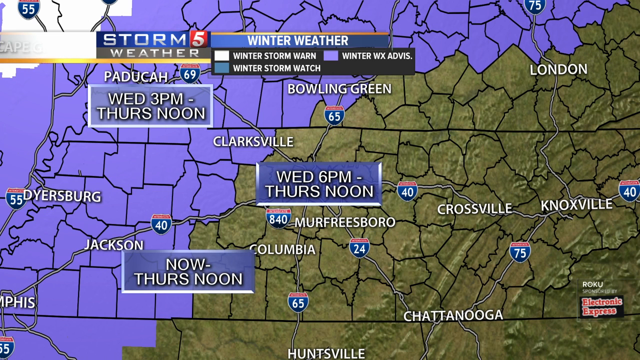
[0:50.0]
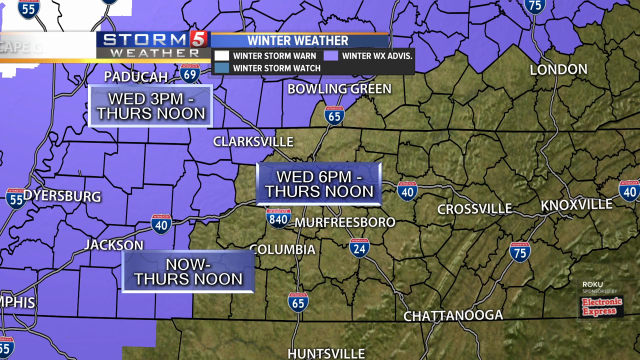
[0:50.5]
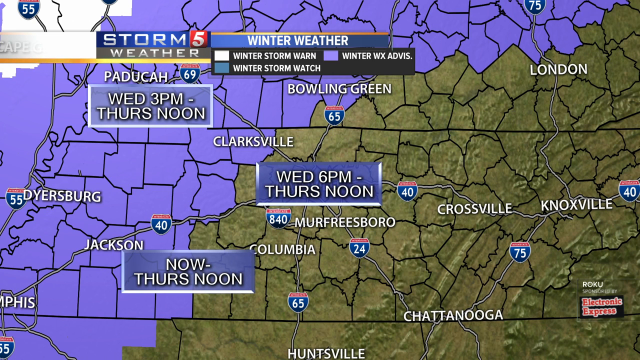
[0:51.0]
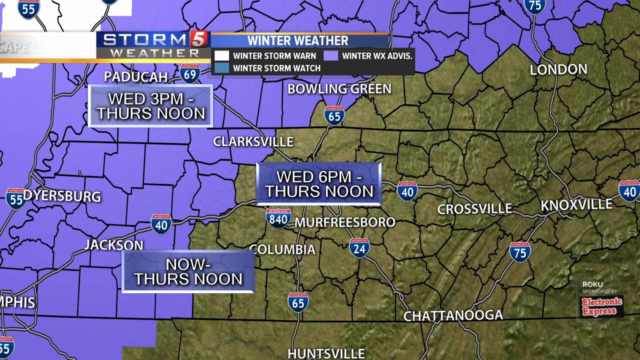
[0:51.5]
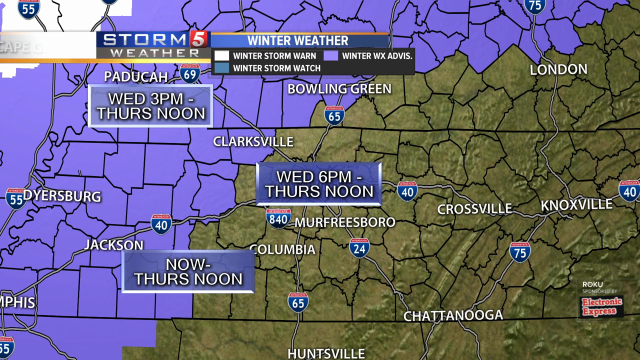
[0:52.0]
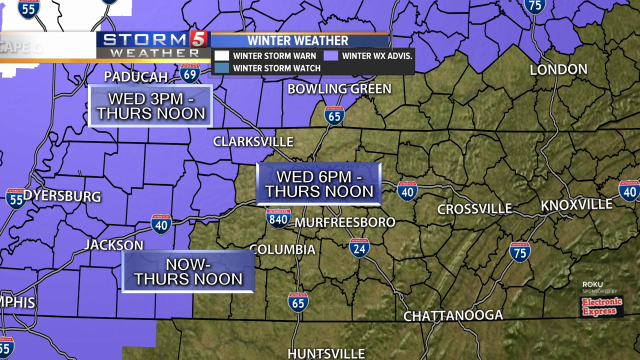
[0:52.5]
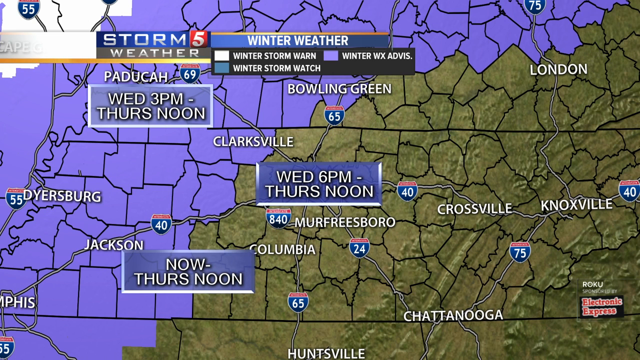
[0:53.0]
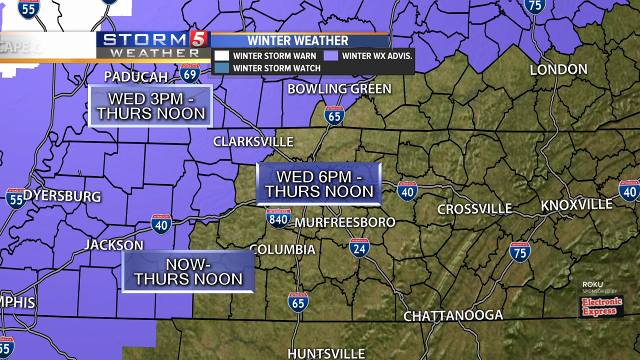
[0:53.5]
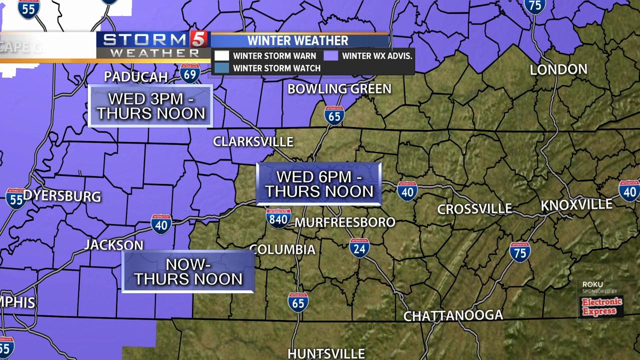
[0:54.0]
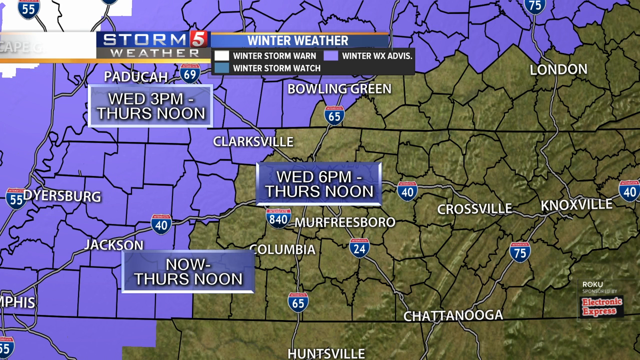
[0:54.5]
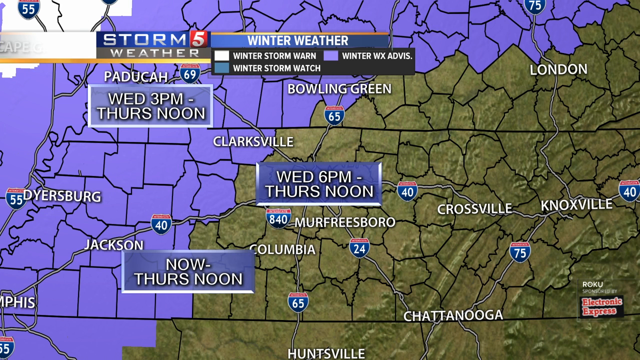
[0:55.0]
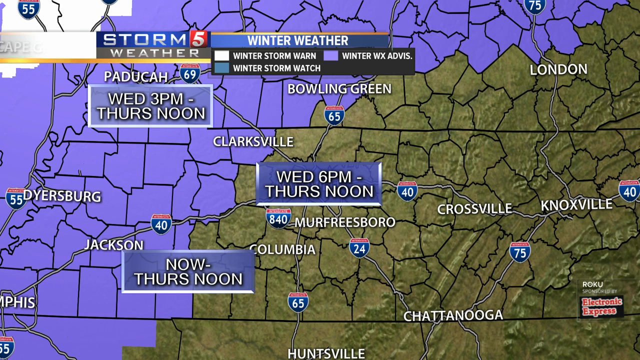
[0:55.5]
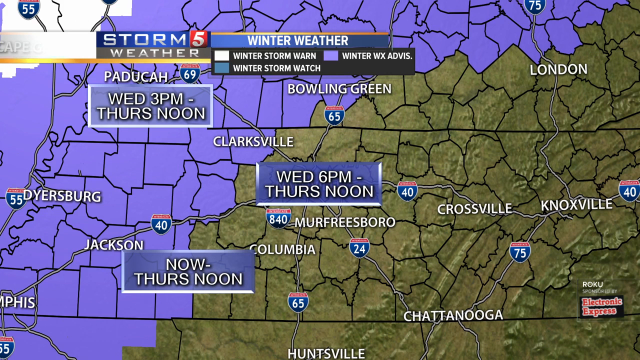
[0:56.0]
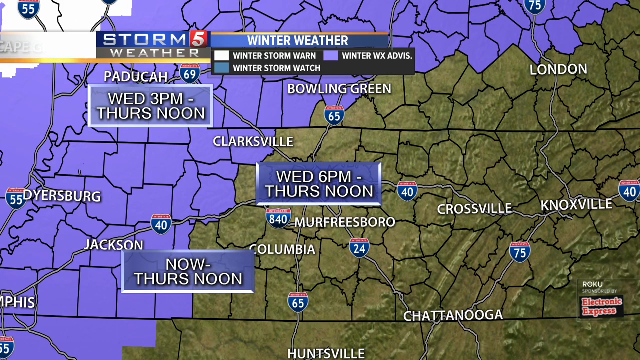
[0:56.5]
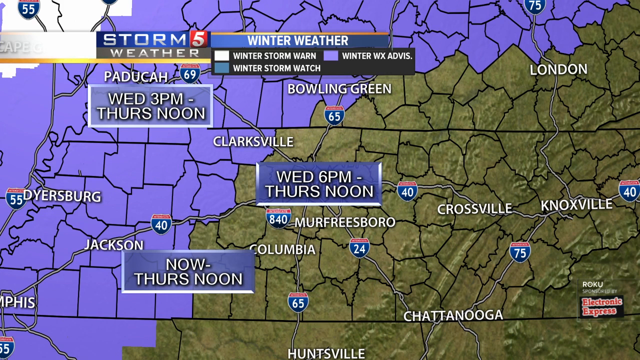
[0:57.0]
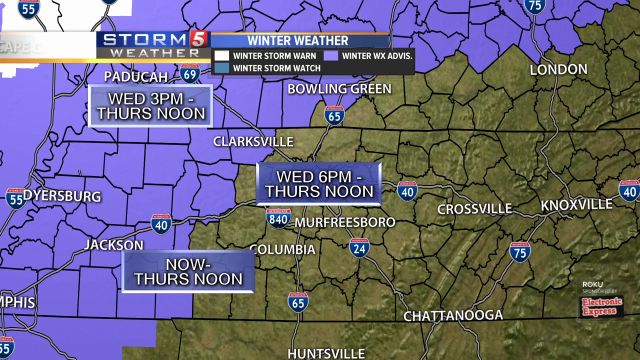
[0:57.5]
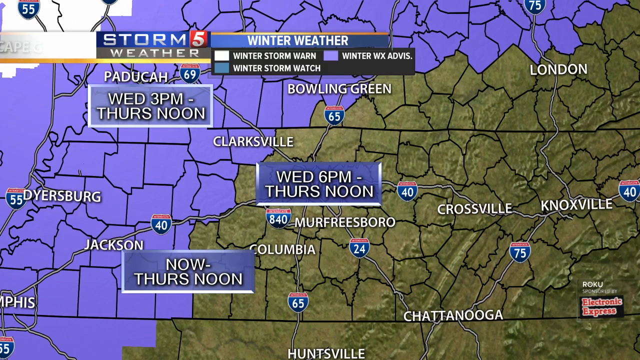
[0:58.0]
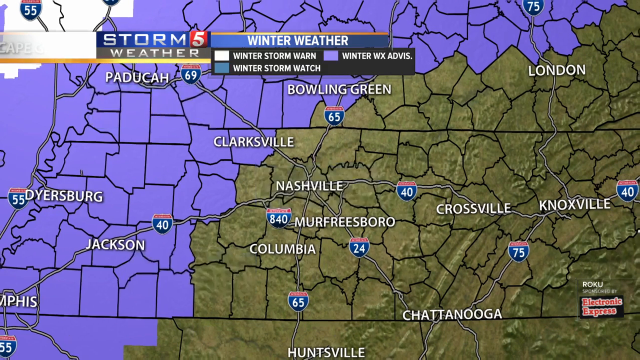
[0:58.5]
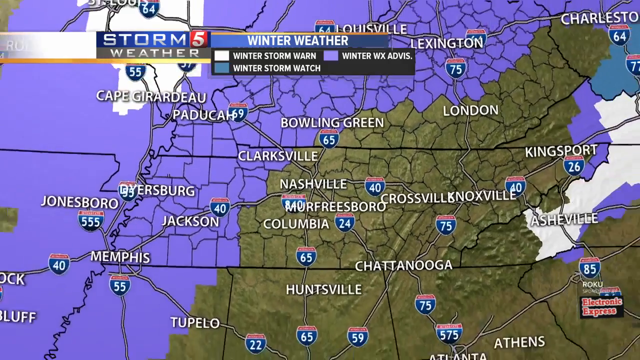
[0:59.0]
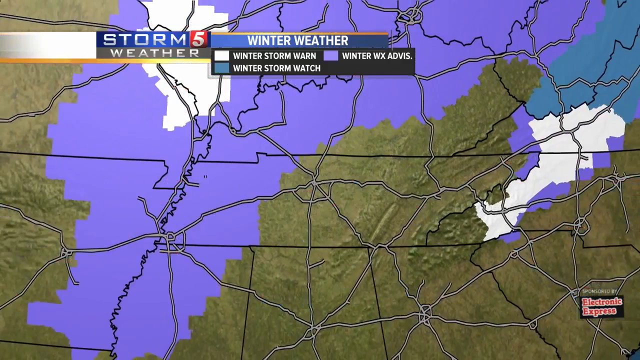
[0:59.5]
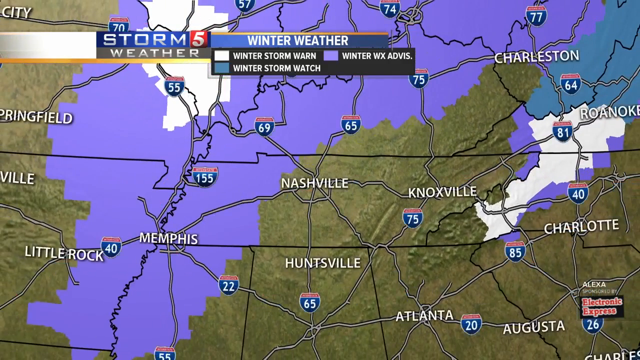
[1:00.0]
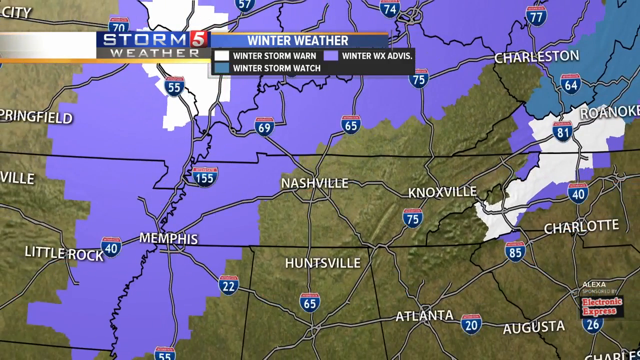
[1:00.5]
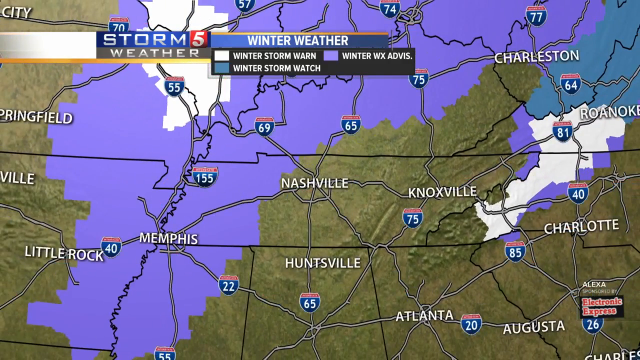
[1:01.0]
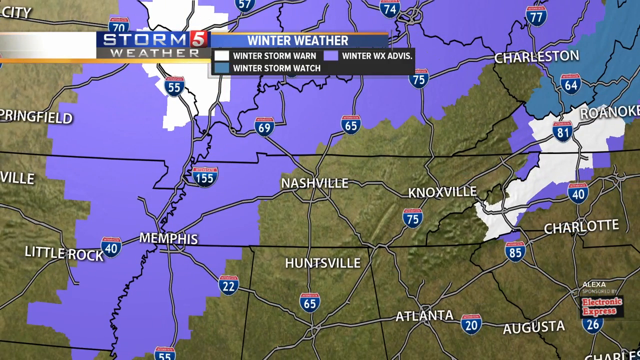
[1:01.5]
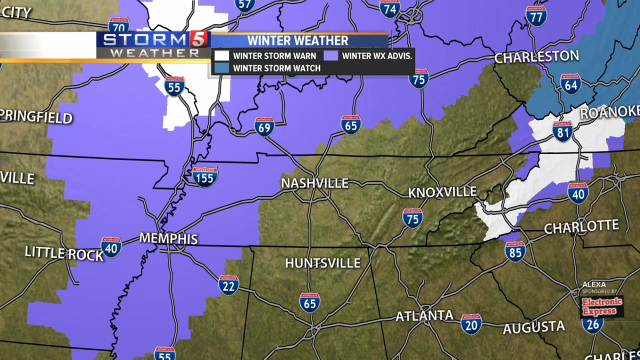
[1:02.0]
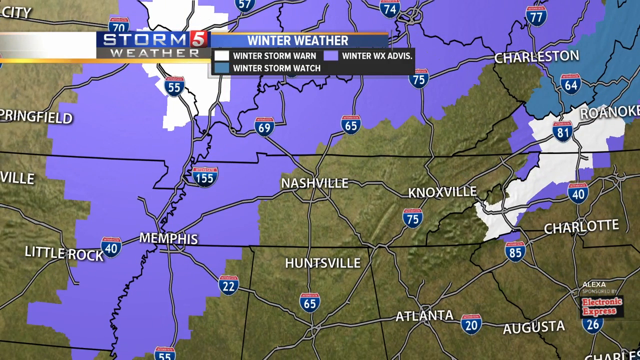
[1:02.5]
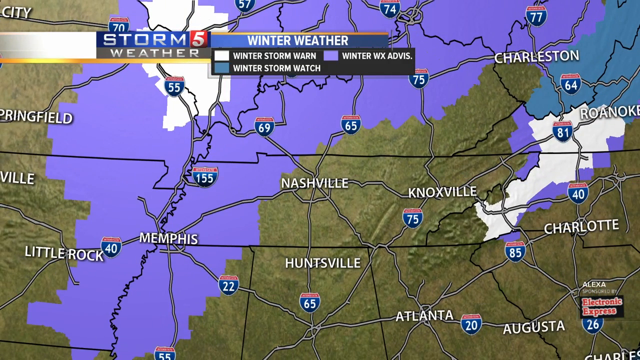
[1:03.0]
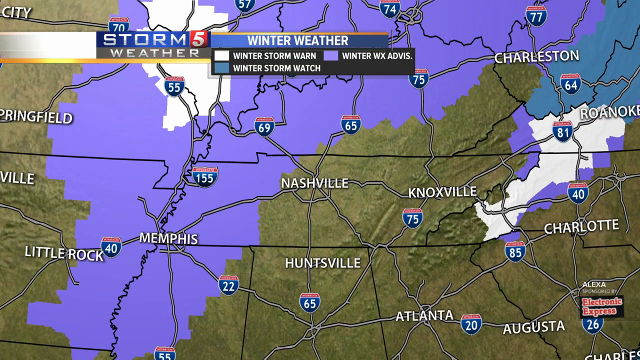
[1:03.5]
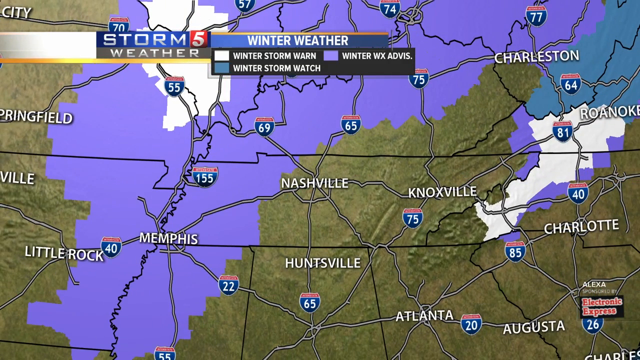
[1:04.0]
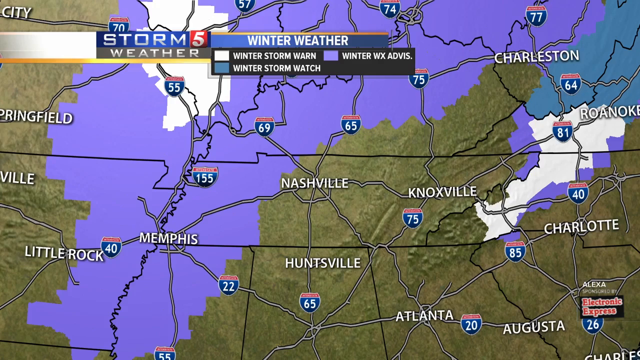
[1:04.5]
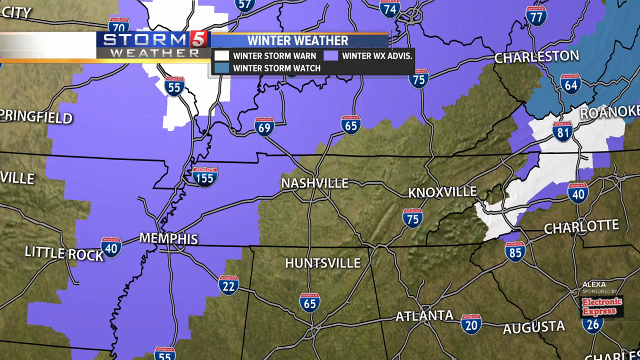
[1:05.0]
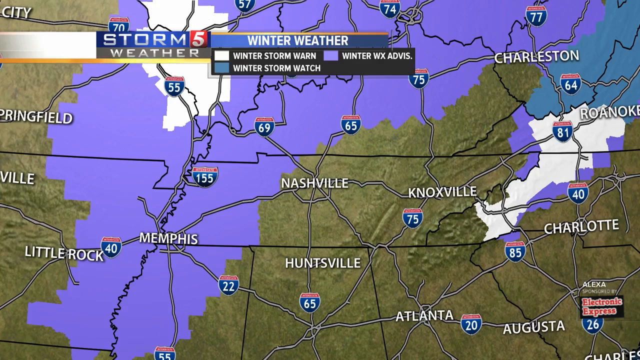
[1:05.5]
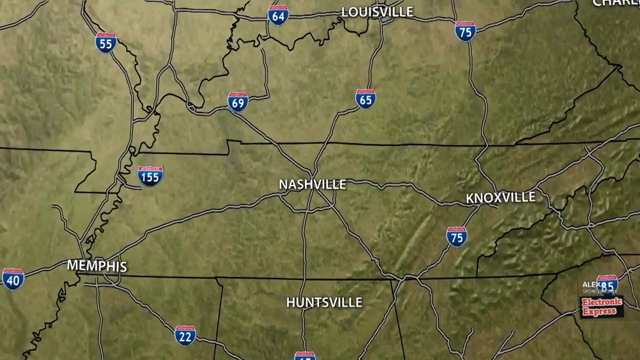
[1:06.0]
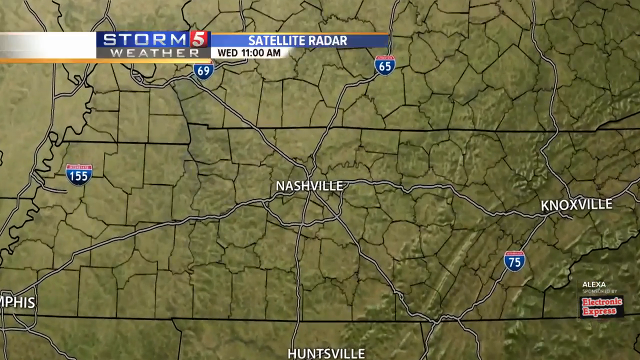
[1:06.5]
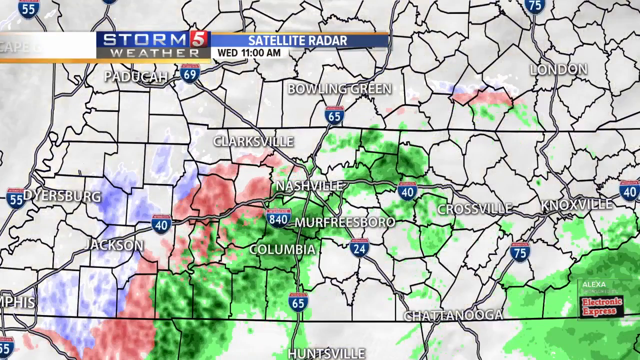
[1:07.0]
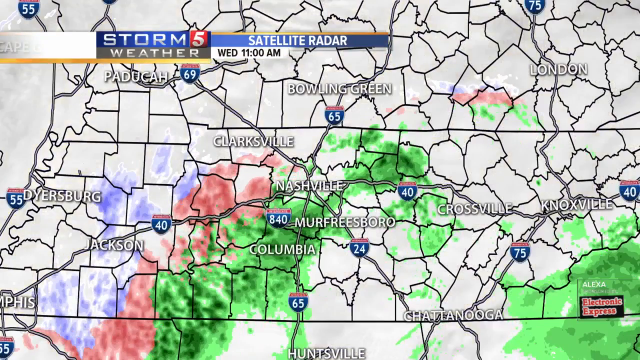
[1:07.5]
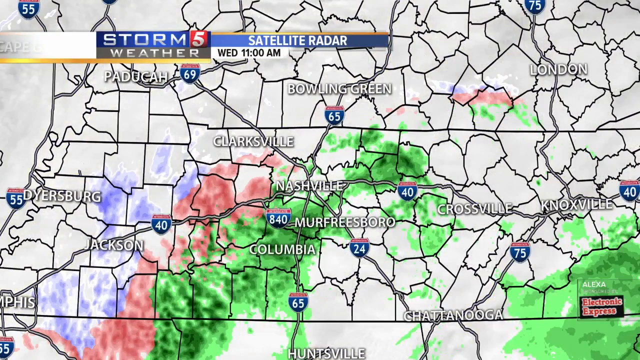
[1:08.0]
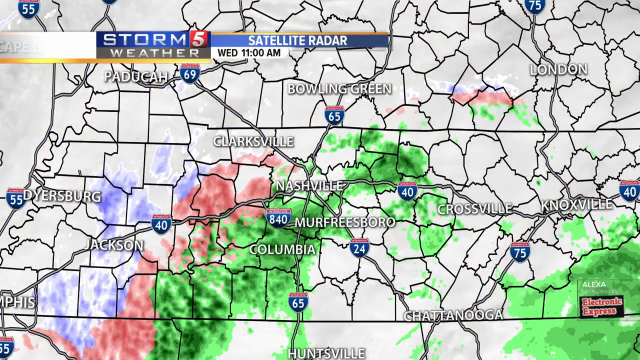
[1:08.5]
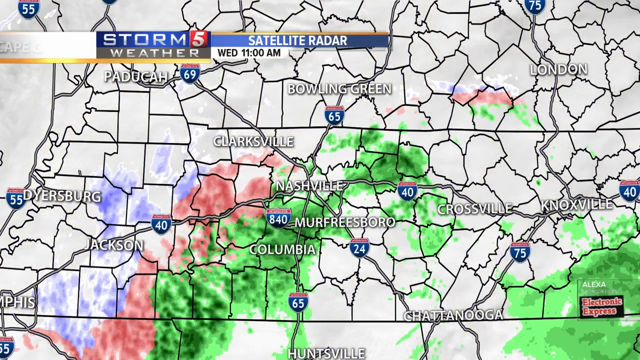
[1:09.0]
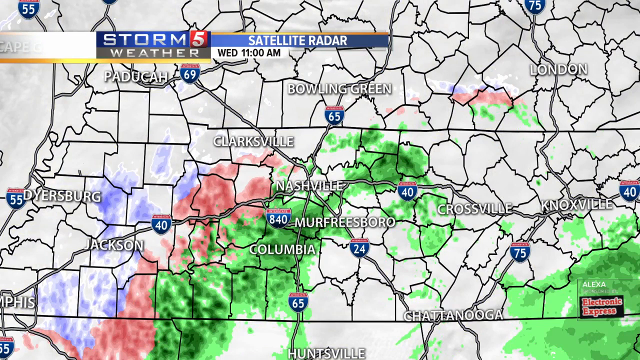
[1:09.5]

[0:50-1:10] The weather forecast continues for areas such as Crossville, Knoxville, London, Dresbeg, Boudicca and Columbia. Temperatures are shown for areas including Knoxville, Charlotte, Louisville, Charleston and Roanoke: St. Louis with 55, Knoxville with 75, Charlotte with 40 and Charleston with 77. A satellite view of the whole area shows some areas experiencing a storm and others not. The camera zooms to show some of the temperatures. The map has a brownish grayish color, with purplish and reddish colors in some areas and green in others, their meaning unclear.